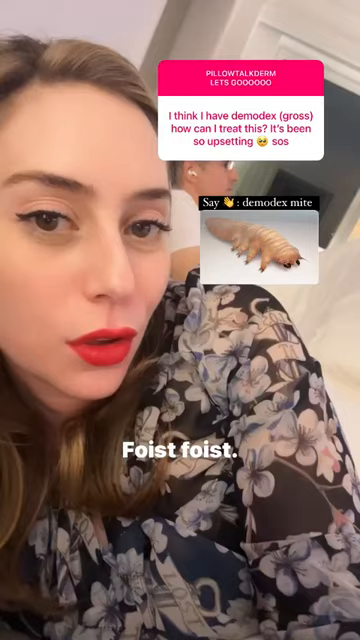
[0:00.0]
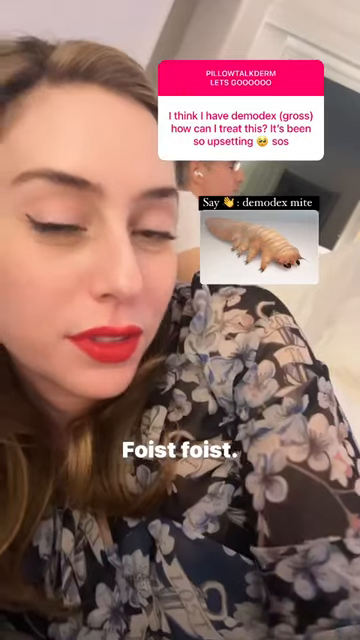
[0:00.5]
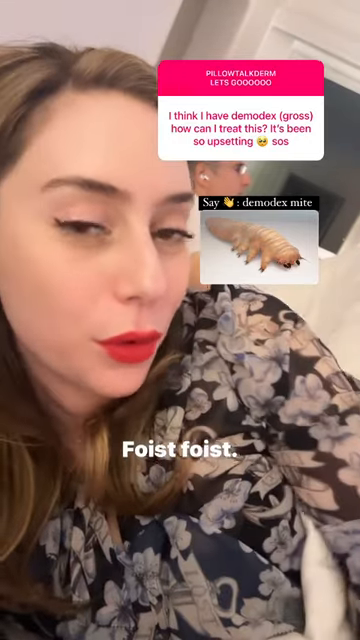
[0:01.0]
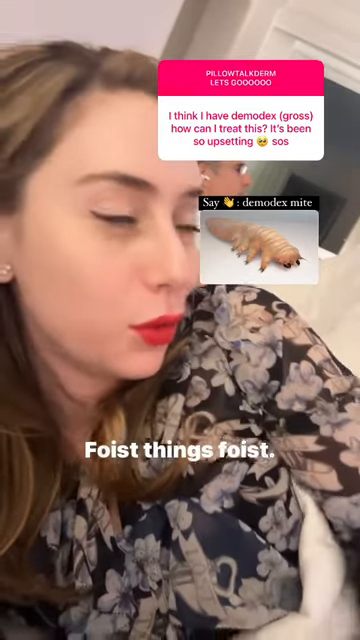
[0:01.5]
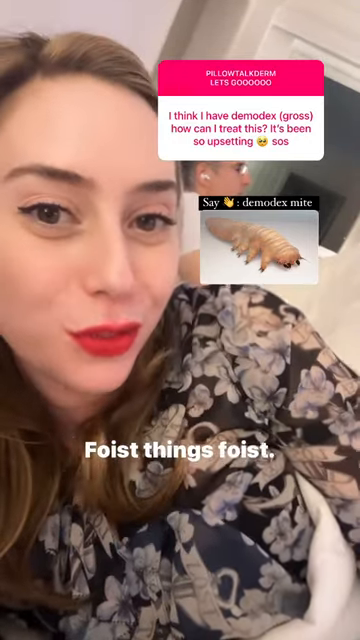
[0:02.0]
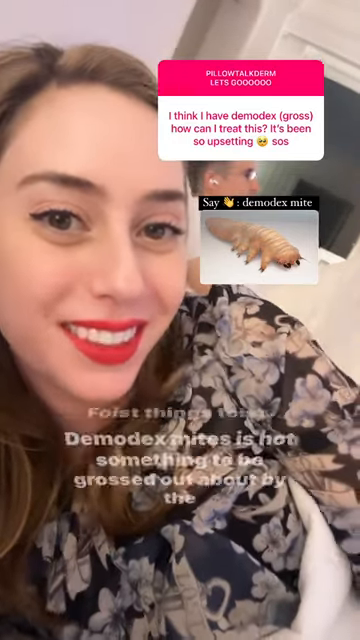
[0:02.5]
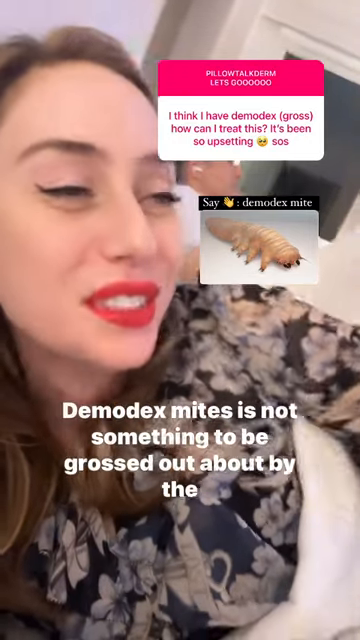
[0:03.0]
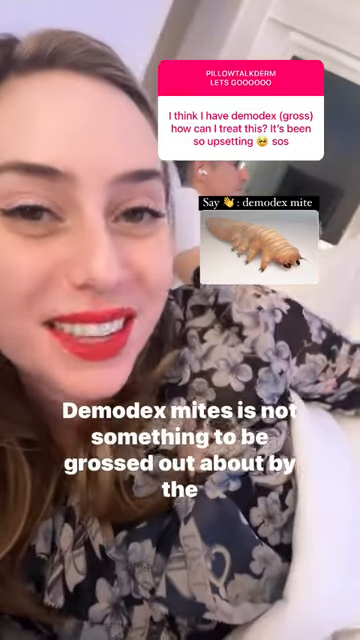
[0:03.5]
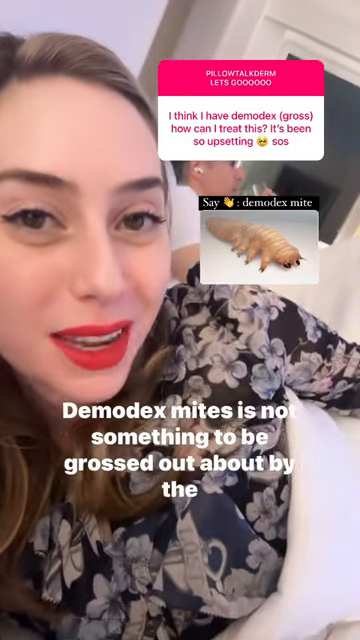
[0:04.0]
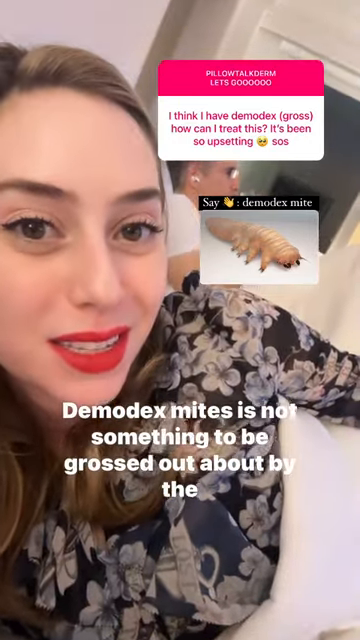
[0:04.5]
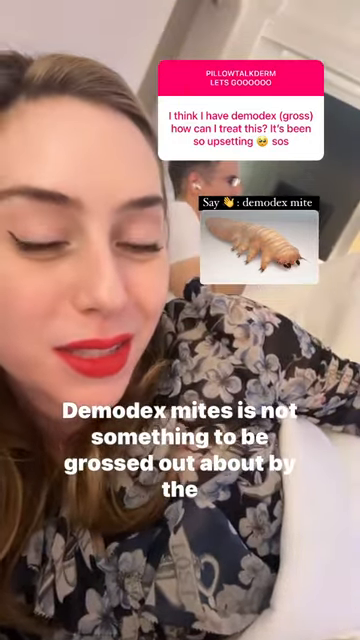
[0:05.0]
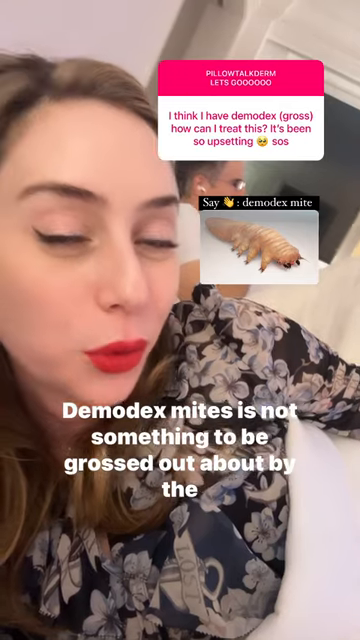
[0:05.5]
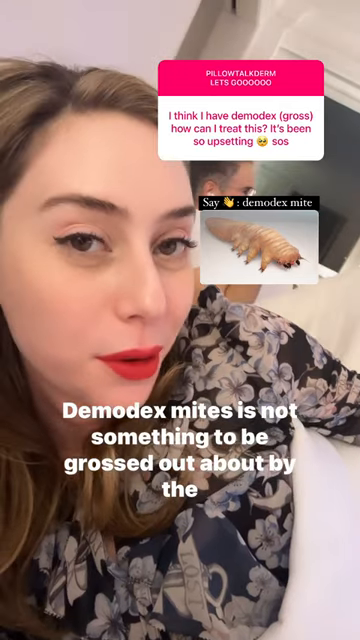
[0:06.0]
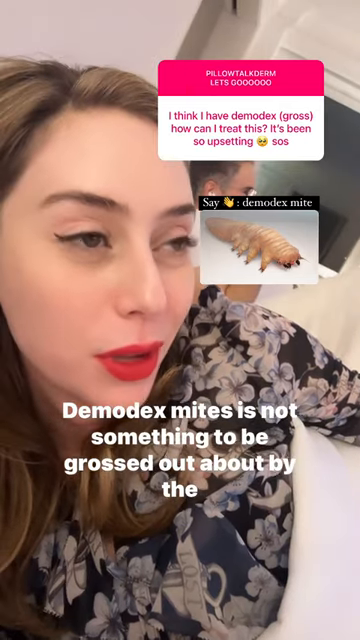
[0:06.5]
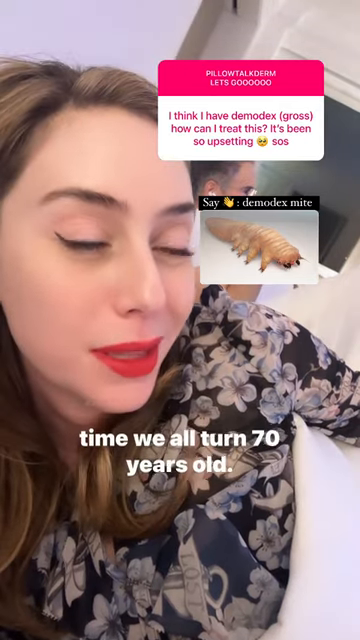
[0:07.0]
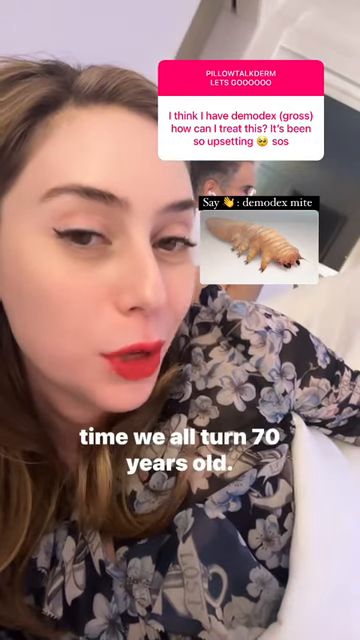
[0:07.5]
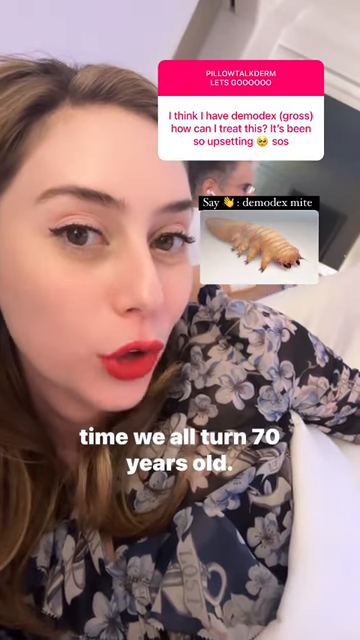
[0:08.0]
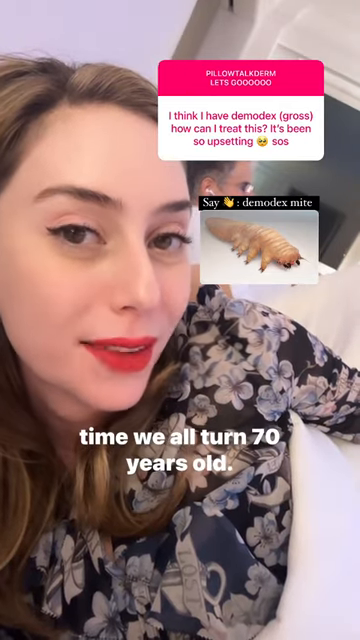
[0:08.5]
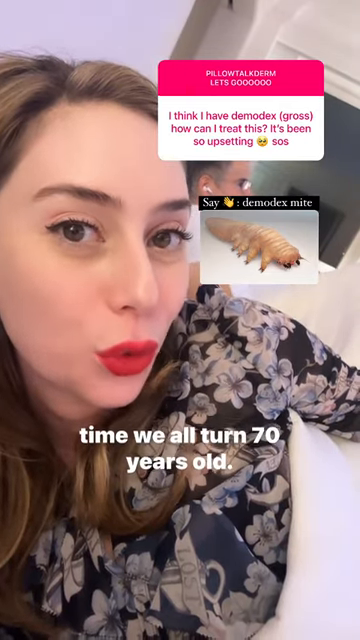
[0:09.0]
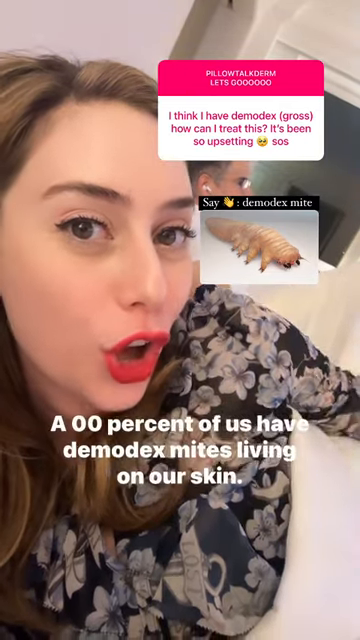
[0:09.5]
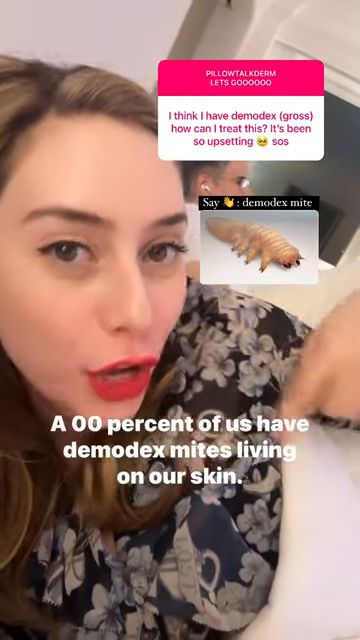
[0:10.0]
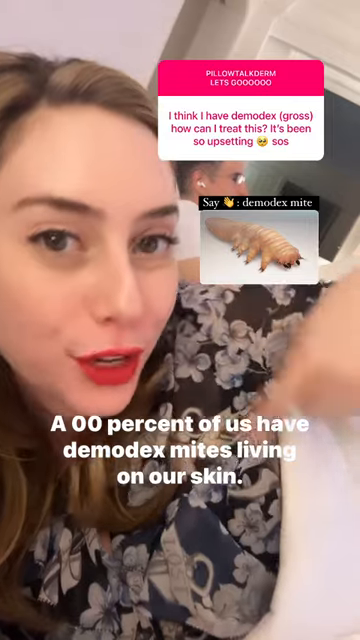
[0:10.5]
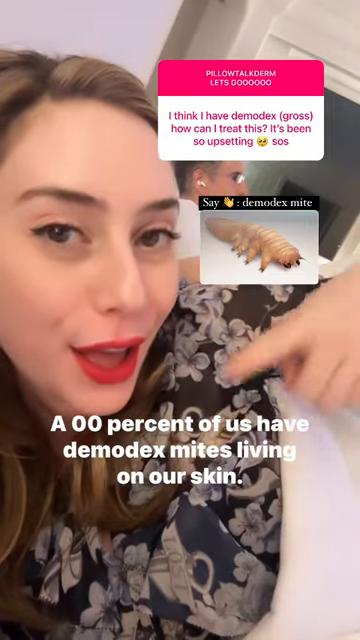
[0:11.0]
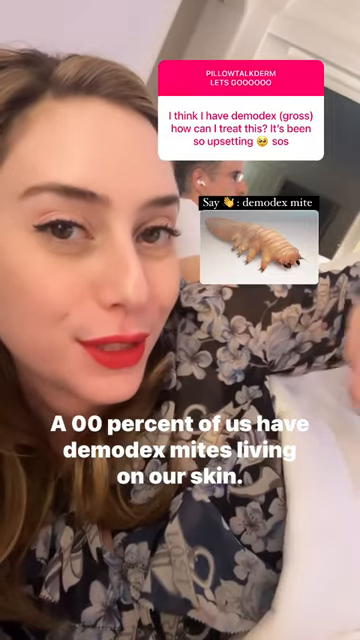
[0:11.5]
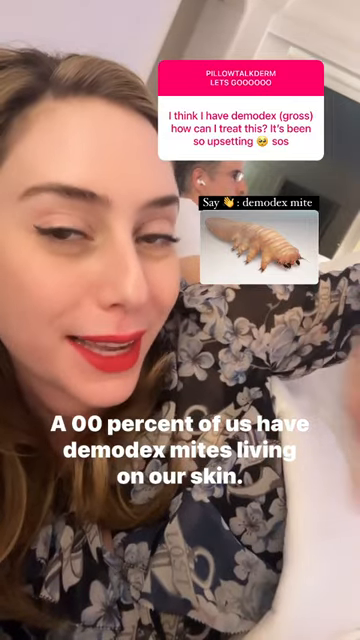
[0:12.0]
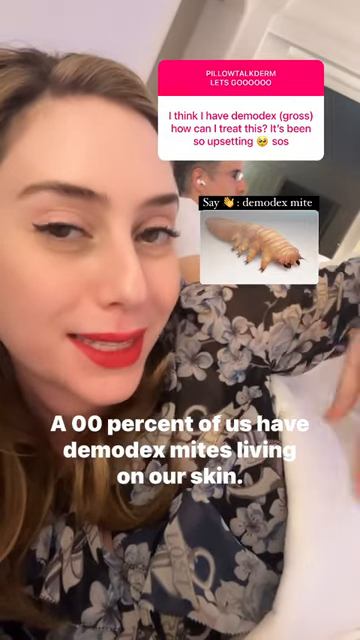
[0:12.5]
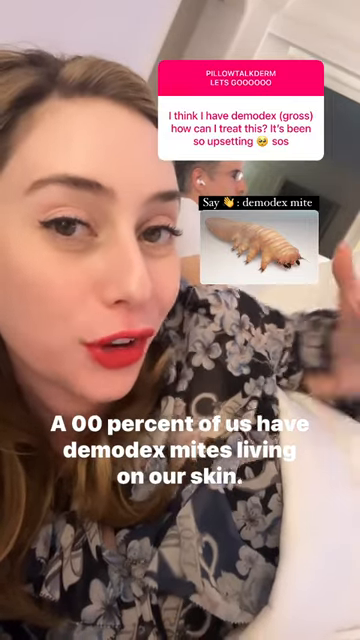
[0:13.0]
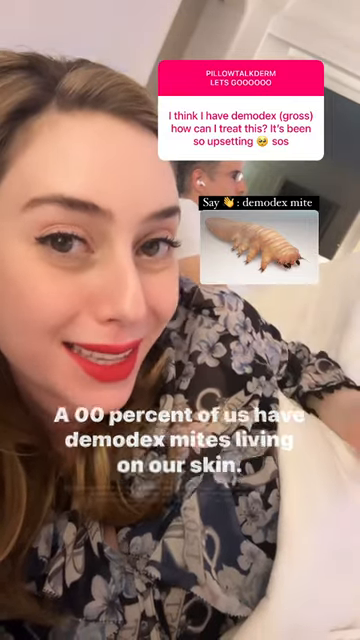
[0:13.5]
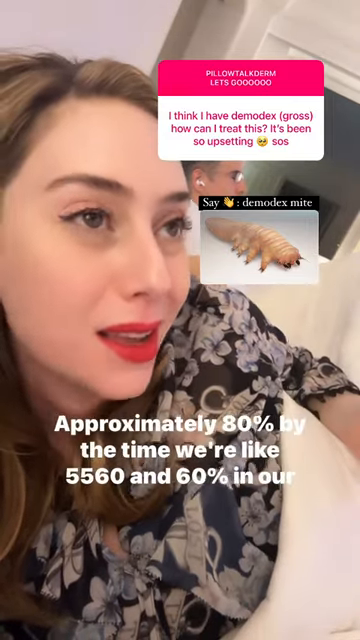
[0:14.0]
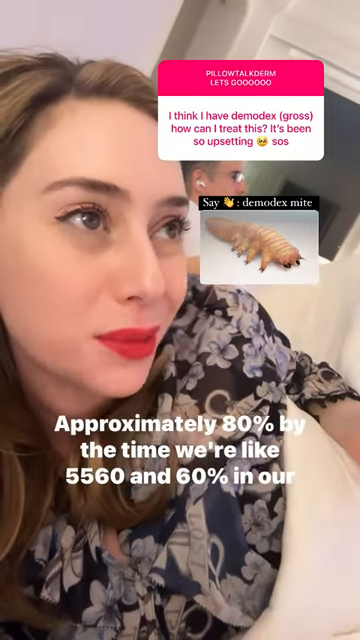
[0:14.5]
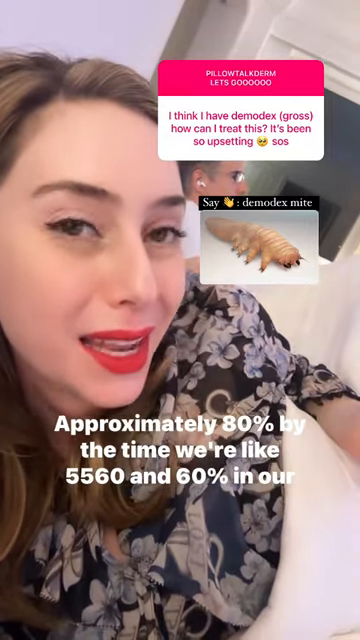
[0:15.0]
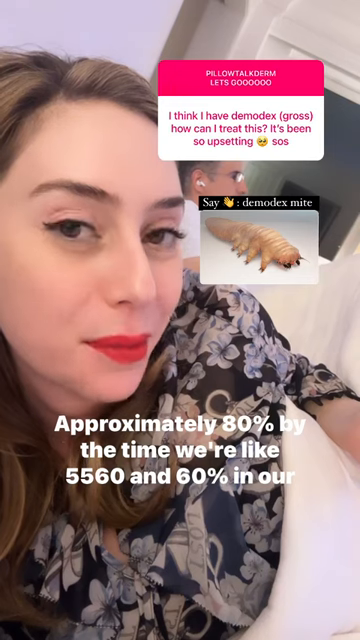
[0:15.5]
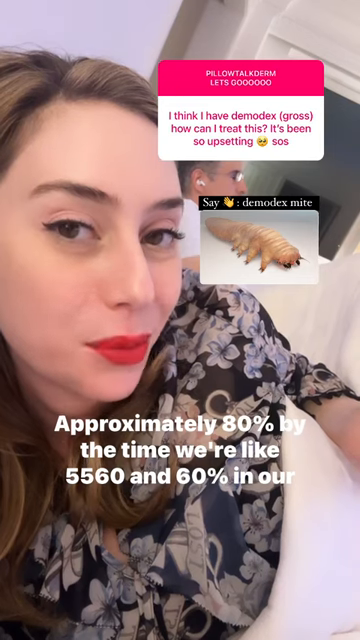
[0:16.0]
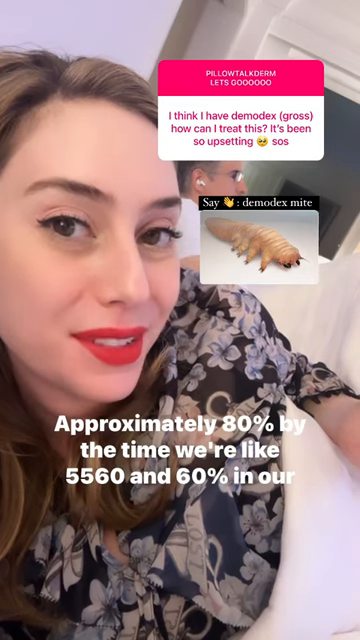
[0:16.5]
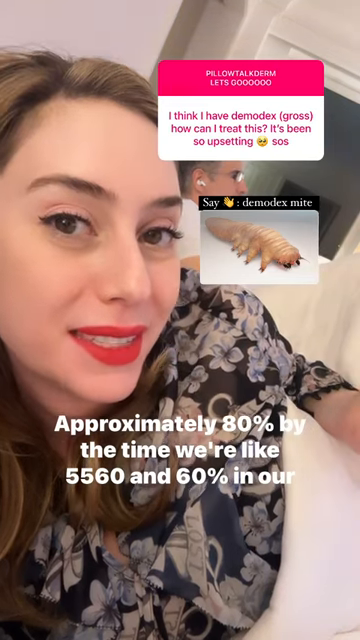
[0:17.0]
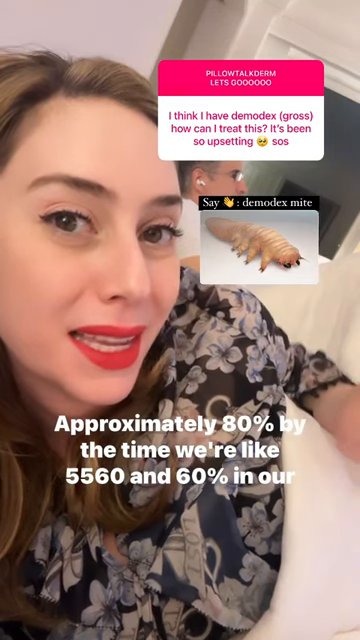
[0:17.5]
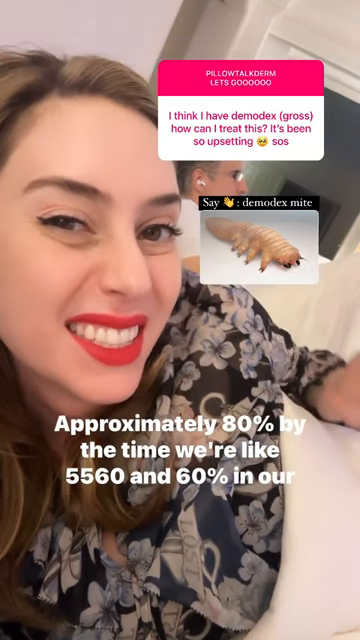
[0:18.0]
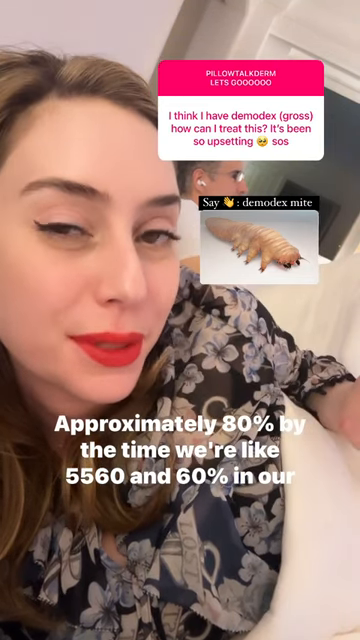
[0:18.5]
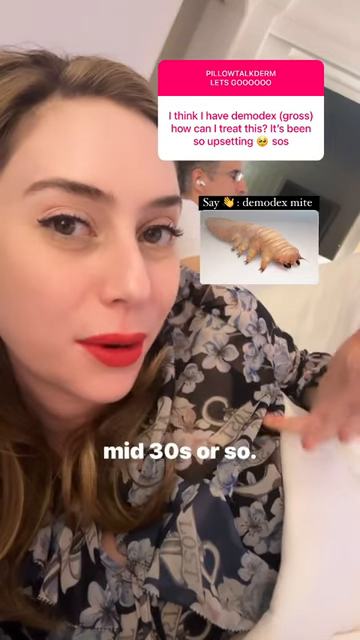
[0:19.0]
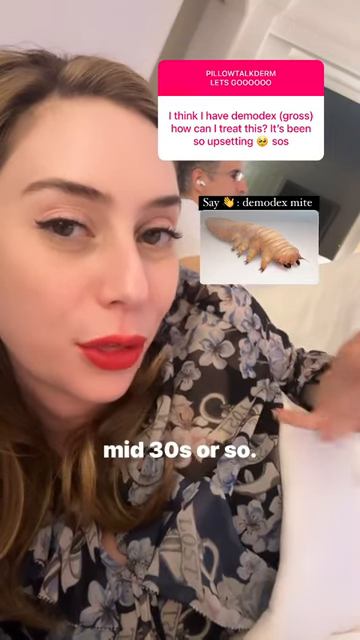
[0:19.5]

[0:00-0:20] A girl is talking in the video, and an on-screen comment reads "I think I have Demodex gross how can I treat this it's been so upsetting SOS". A picture appears of what looks like maybe a little bug, possibly a mite of some sort. White words in front of her read "foist foist". Pictures come up while she talks, and on-screen text reads "they're not something to be grossed out about", continuing with "by the time we all turn 70 years old" and "approximately 80%".